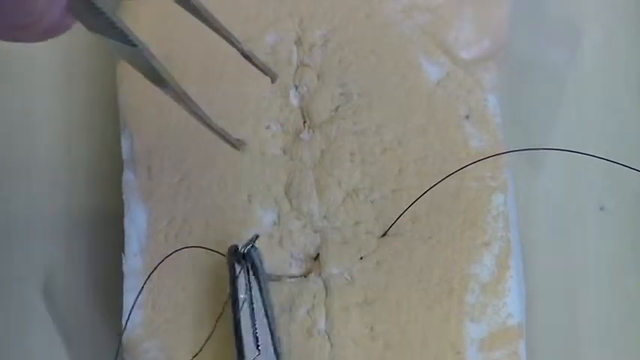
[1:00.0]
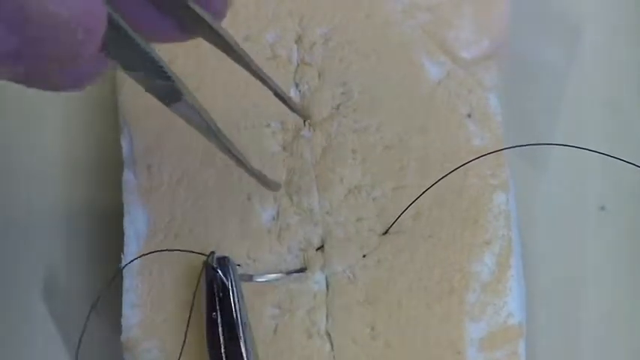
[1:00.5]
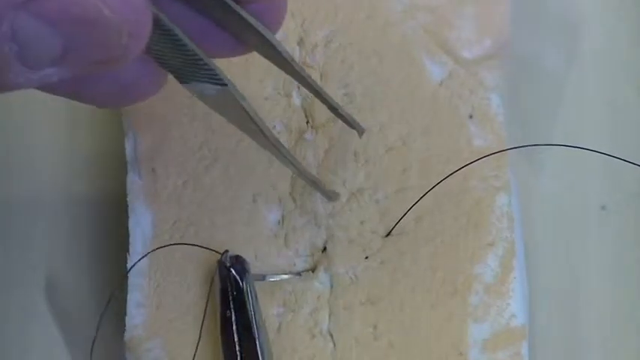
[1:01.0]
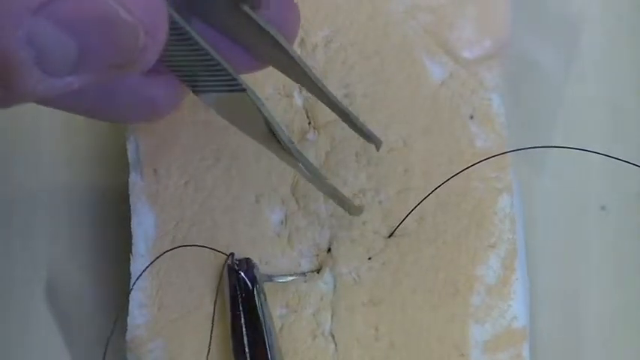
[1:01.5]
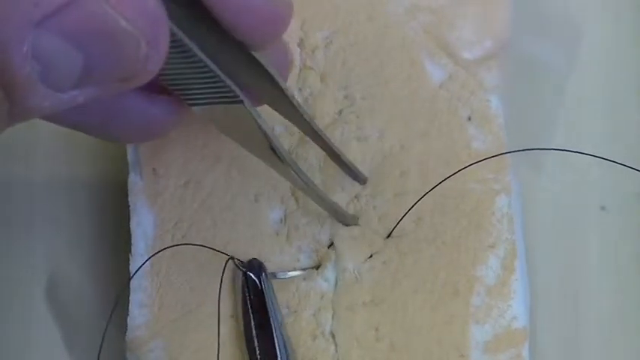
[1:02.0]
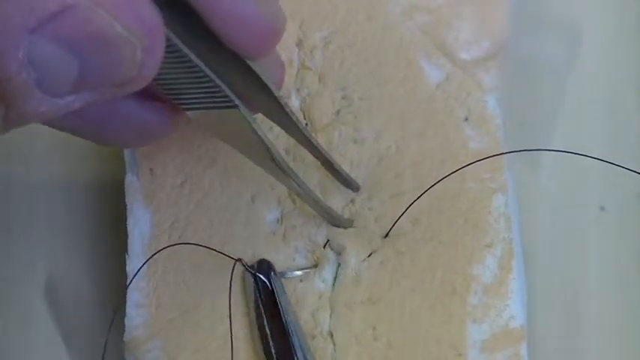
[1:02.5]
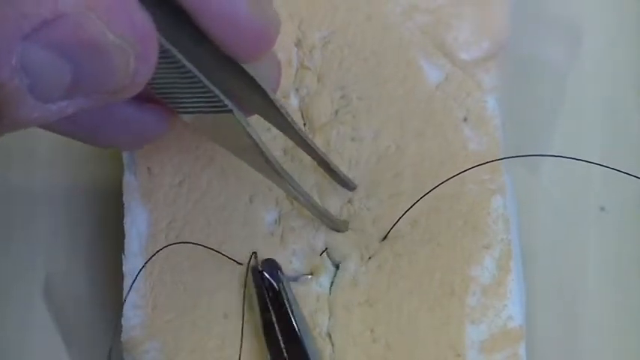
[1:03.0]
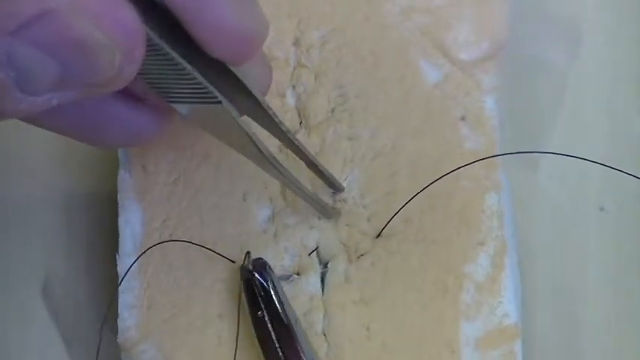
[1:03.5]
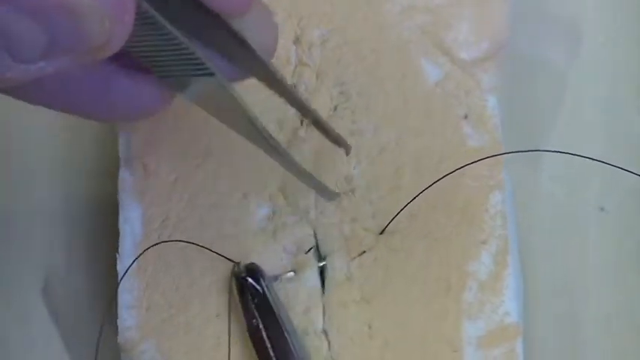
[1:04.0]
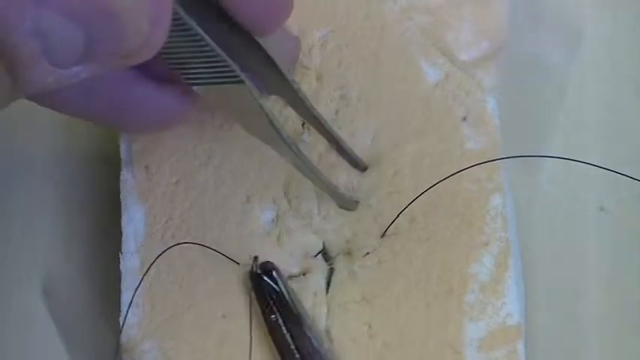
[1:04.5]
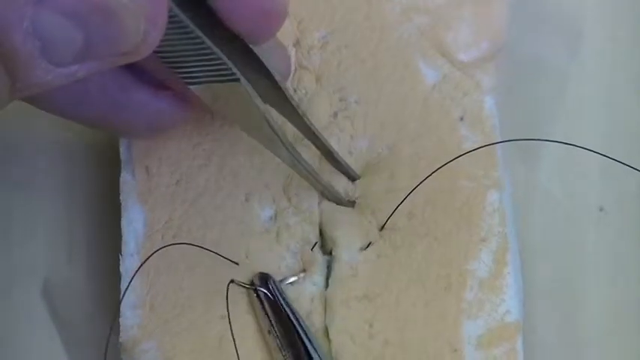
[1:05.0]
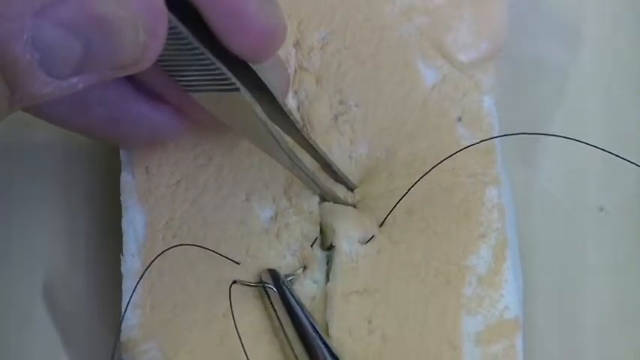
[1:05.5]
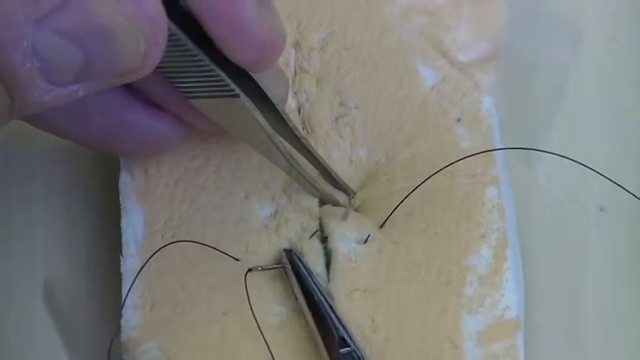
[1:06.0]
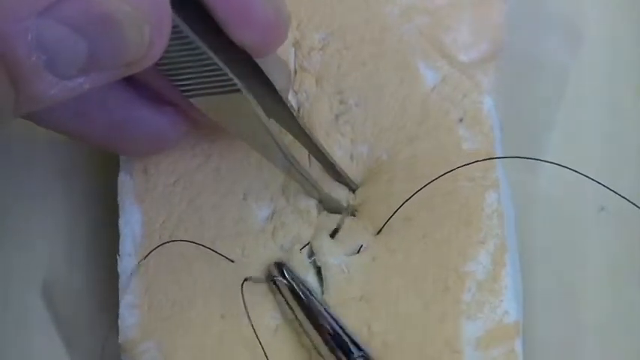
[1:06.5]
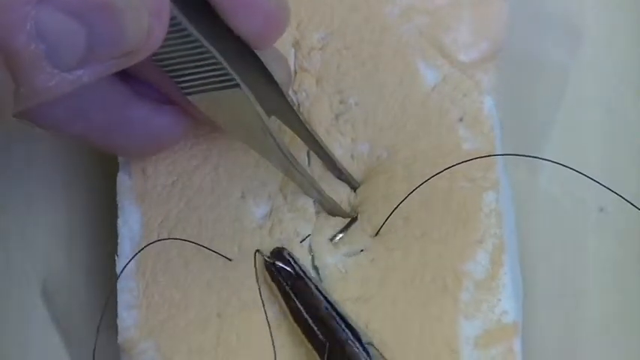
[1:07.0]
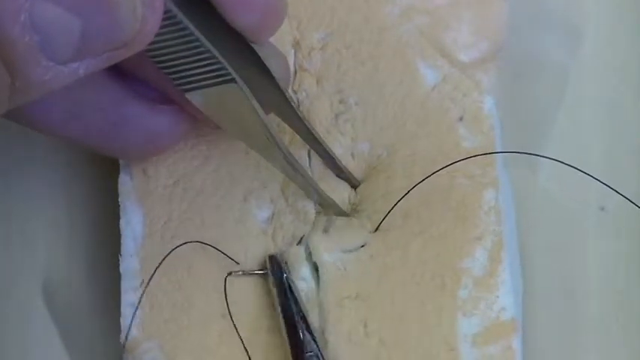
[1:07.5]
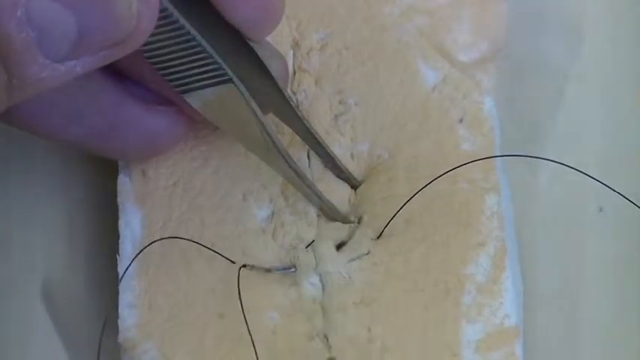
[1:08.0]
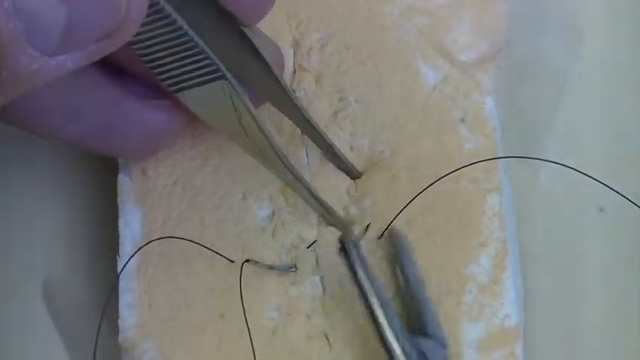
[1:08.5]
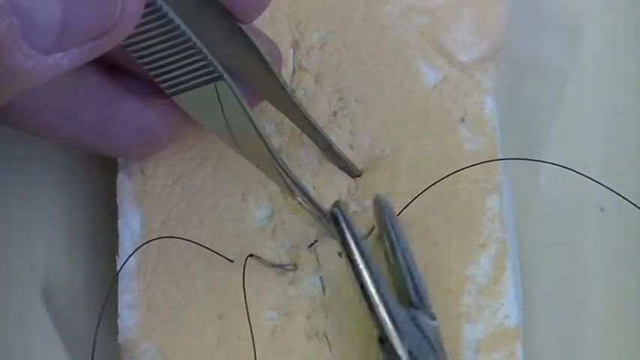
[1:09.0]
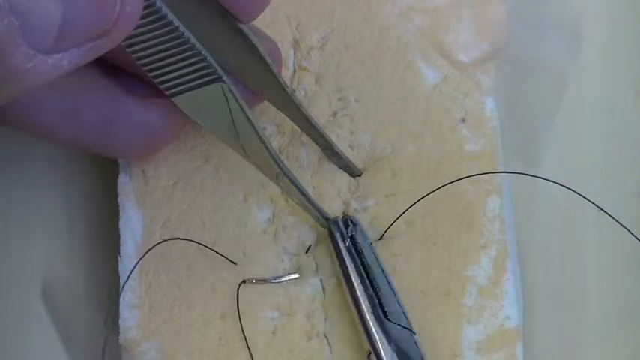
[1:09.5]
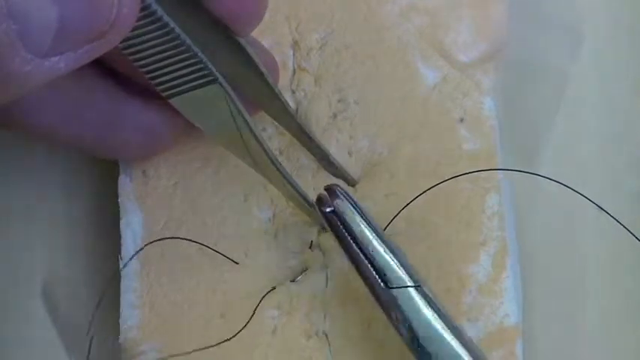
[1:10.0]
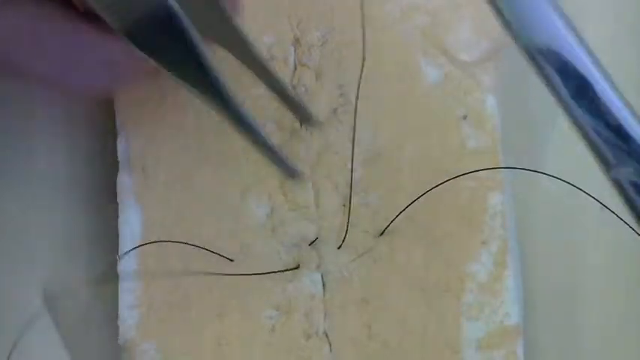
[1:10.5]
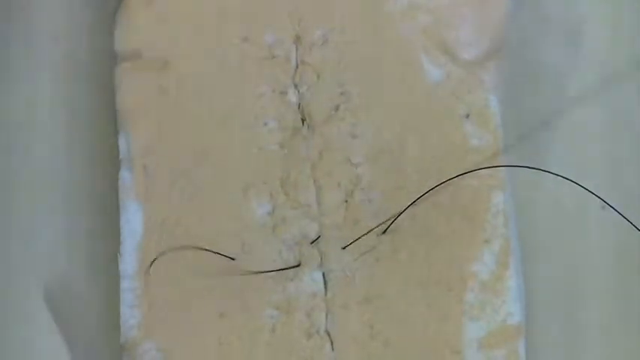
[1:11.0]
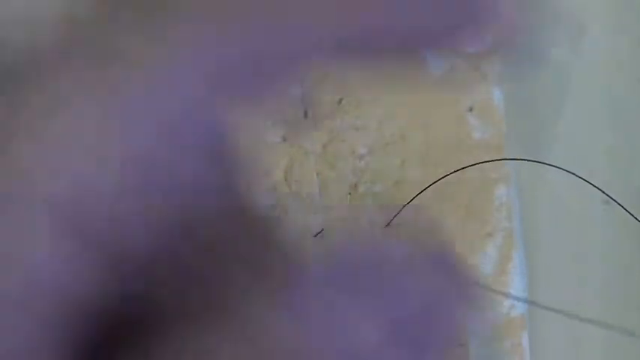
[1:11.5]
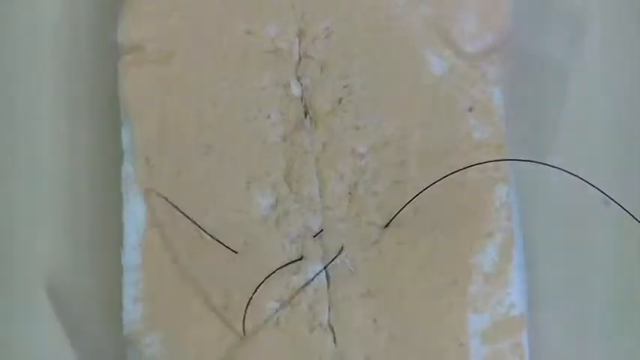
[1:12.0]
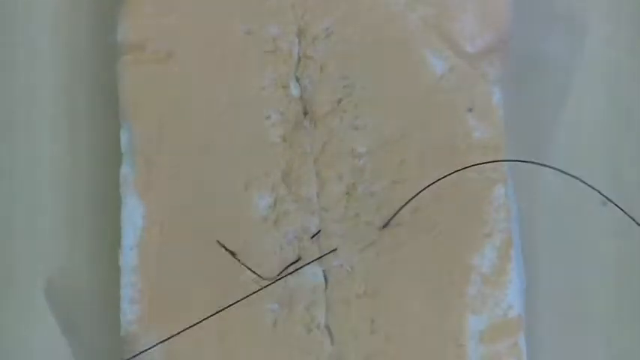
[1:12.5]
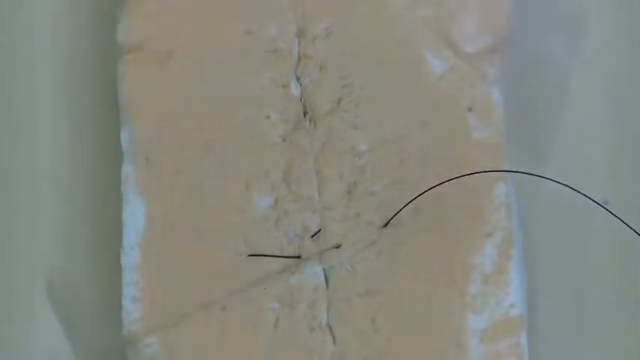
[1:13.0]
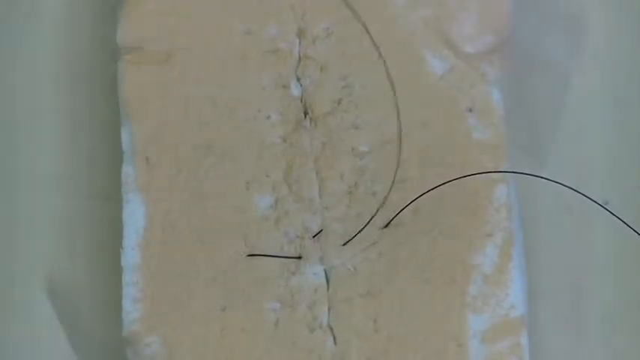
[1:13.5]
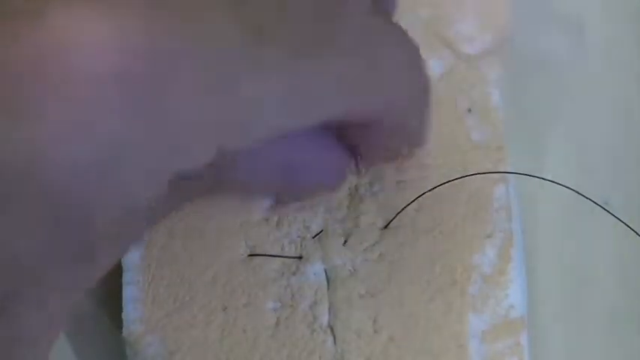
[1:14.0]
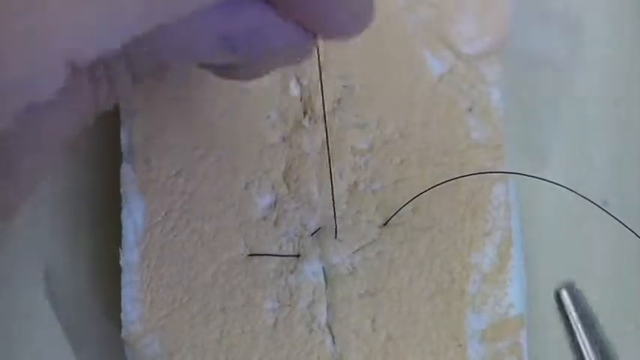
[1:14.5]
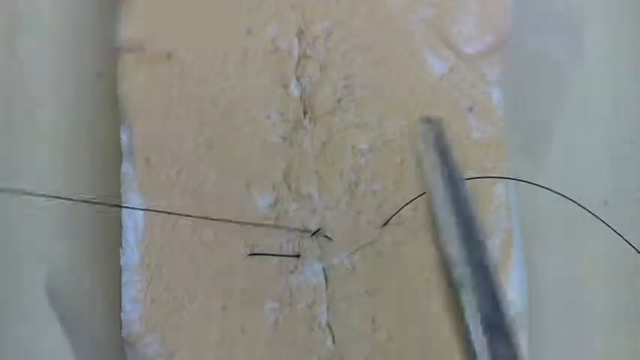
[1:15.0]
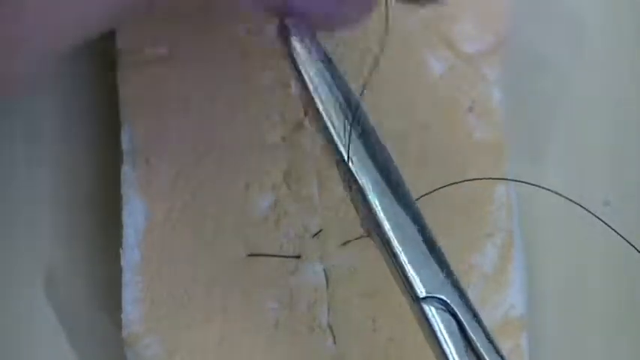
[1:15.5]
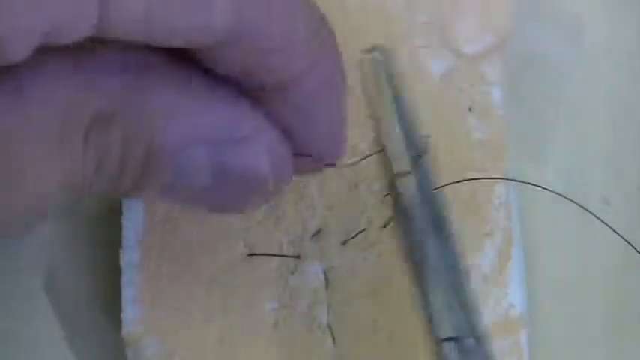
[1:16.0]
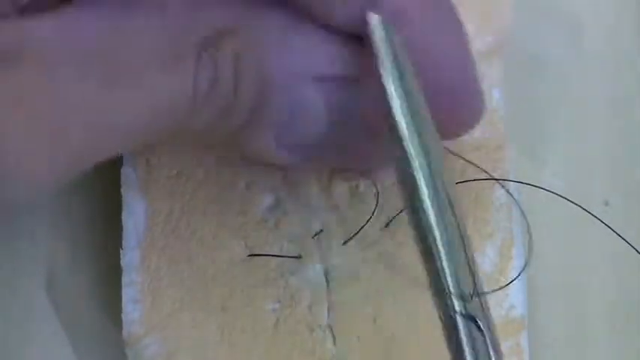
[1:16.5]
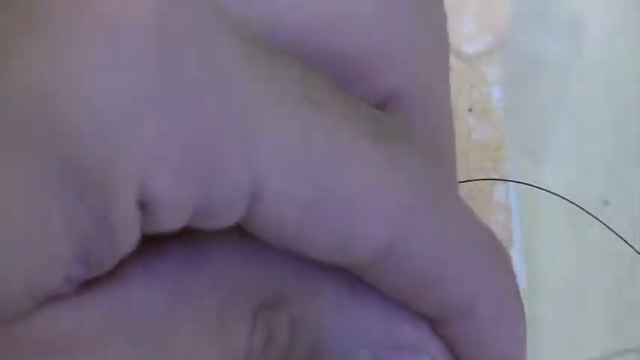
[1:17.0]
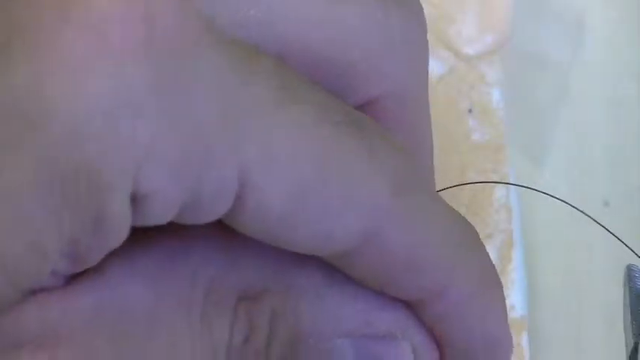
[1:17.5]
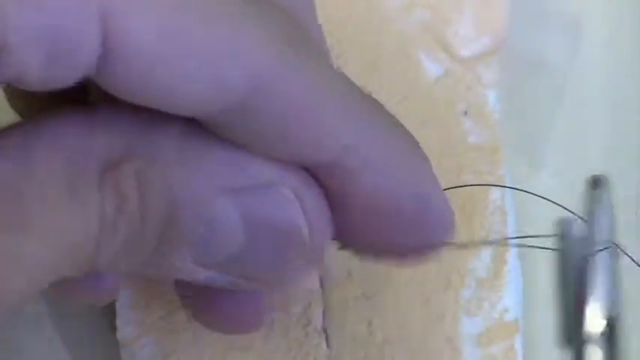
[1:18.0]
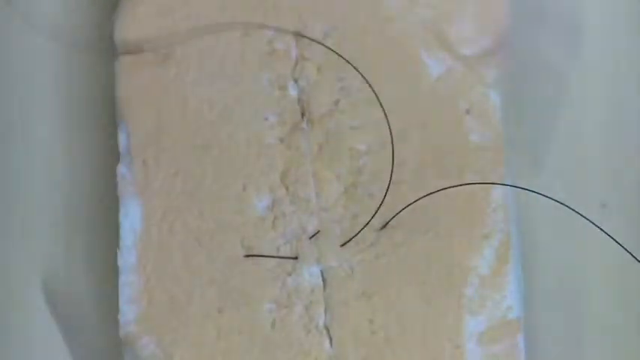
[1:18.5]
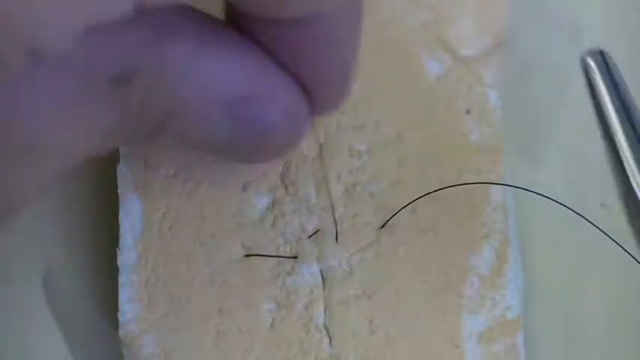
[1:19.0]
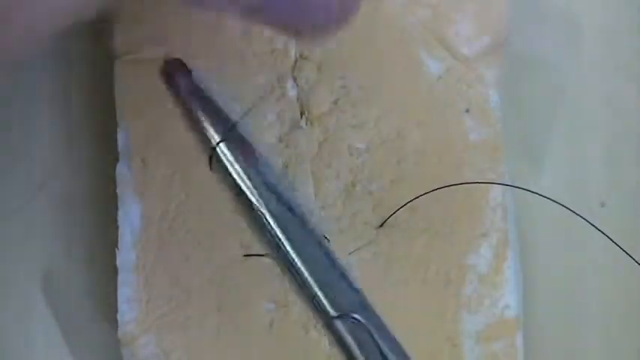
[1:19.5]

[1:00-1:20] The stitching process continues, with the man working precisely. He runs the thread around the forceps, apparently demonstrating how to use the two forceps to stitch the two loose parts together.